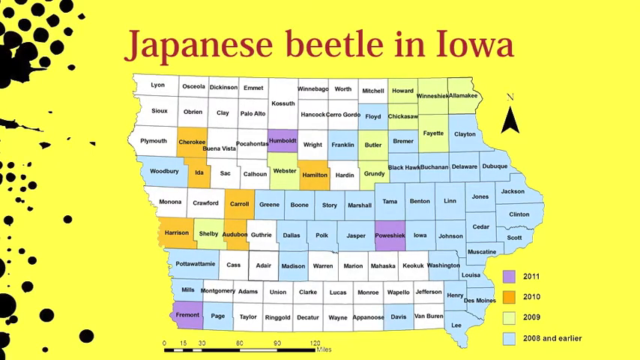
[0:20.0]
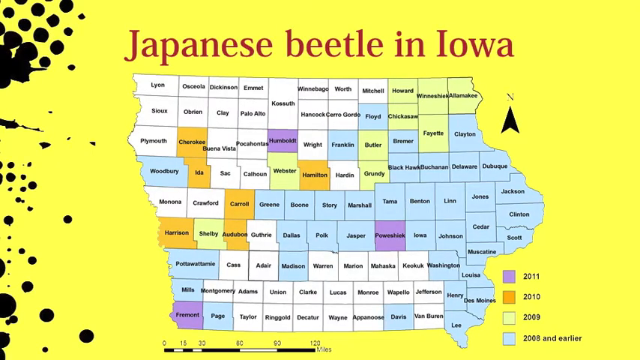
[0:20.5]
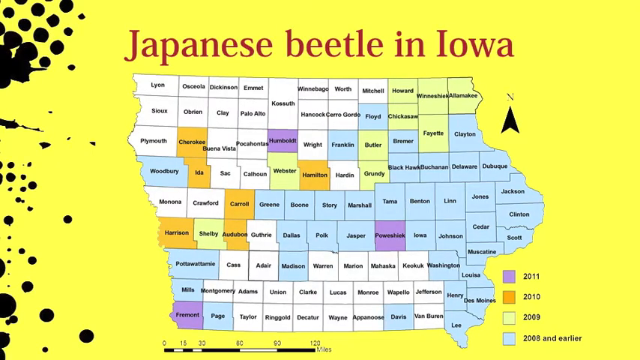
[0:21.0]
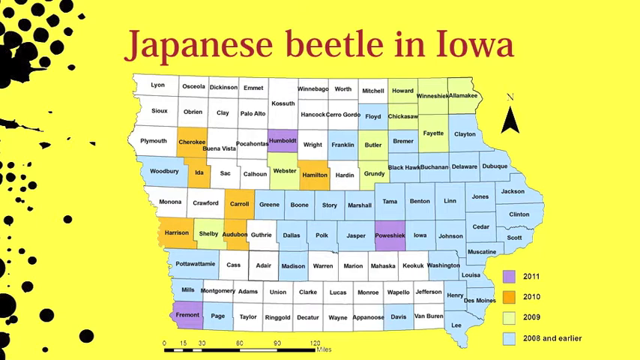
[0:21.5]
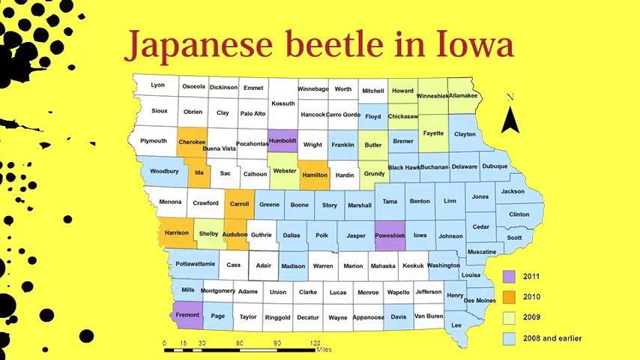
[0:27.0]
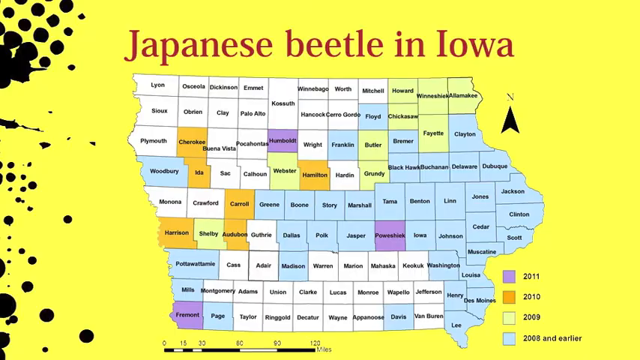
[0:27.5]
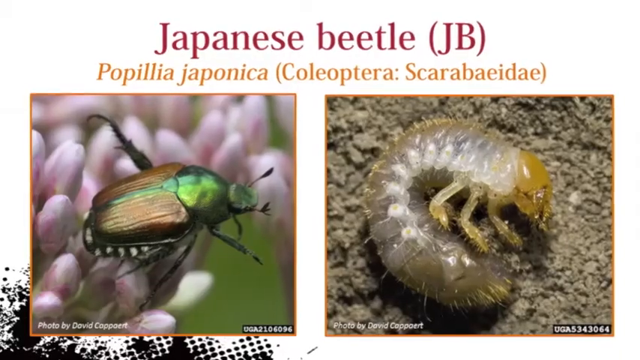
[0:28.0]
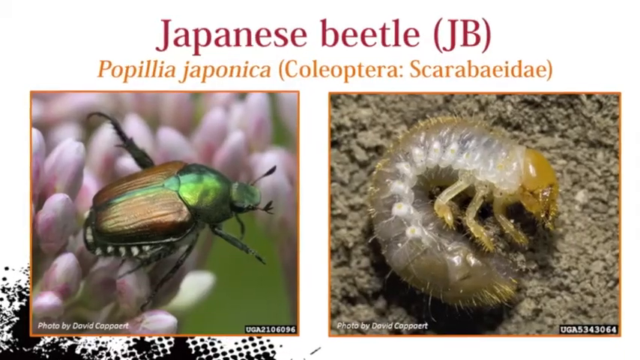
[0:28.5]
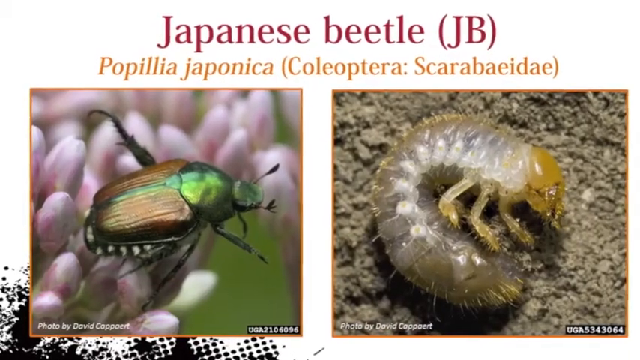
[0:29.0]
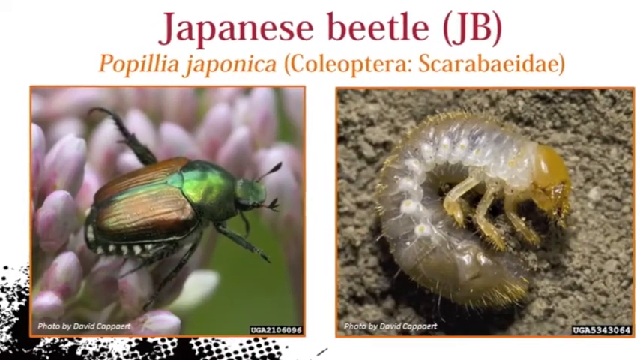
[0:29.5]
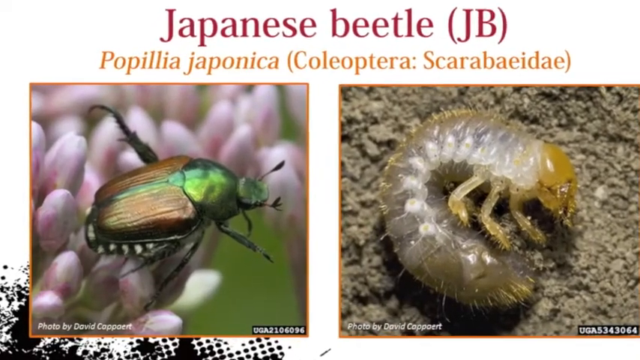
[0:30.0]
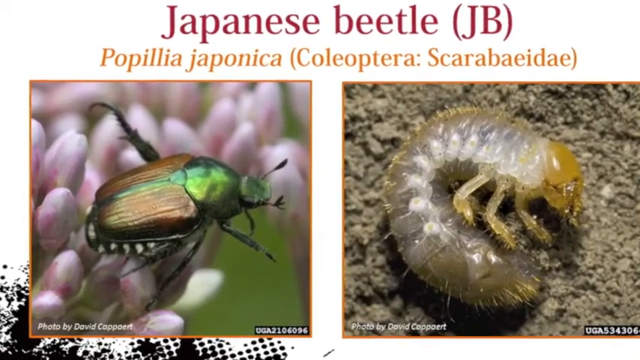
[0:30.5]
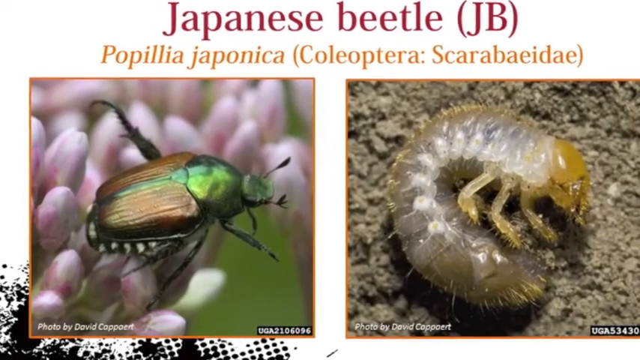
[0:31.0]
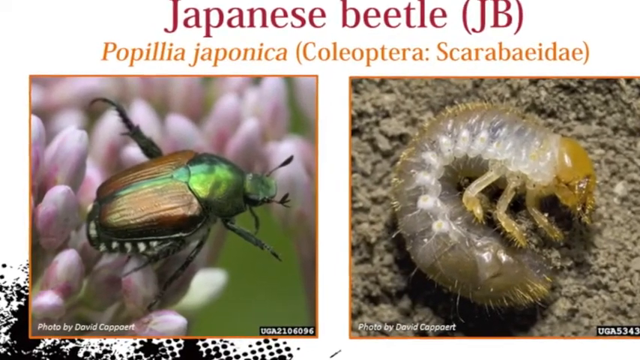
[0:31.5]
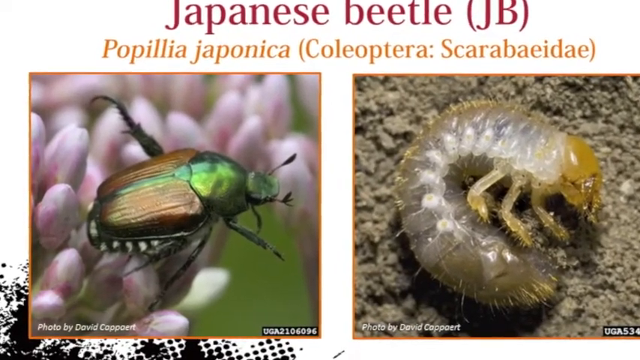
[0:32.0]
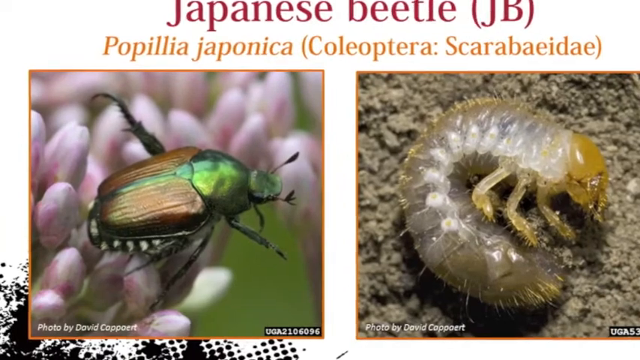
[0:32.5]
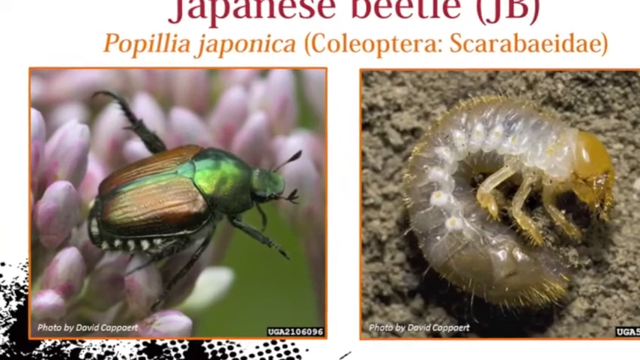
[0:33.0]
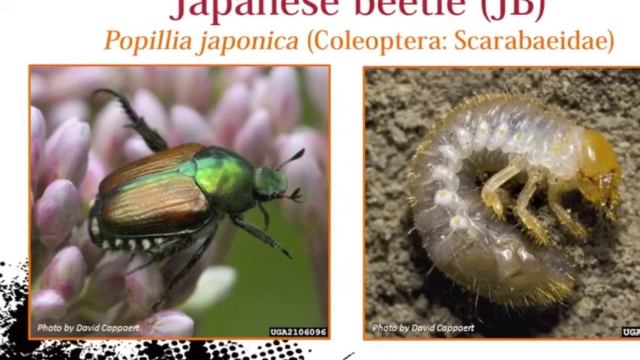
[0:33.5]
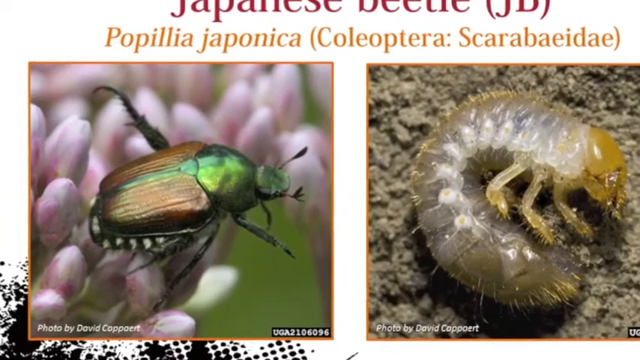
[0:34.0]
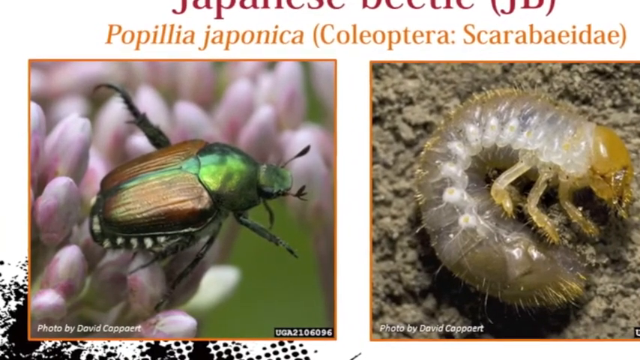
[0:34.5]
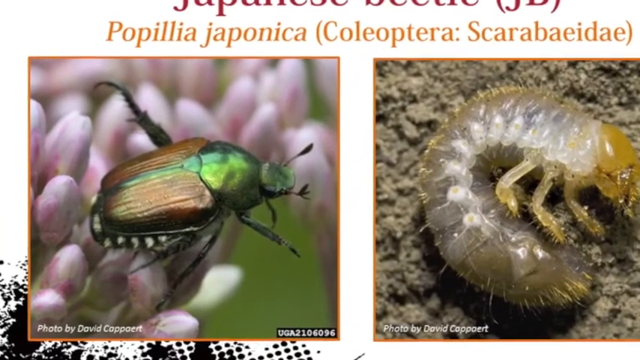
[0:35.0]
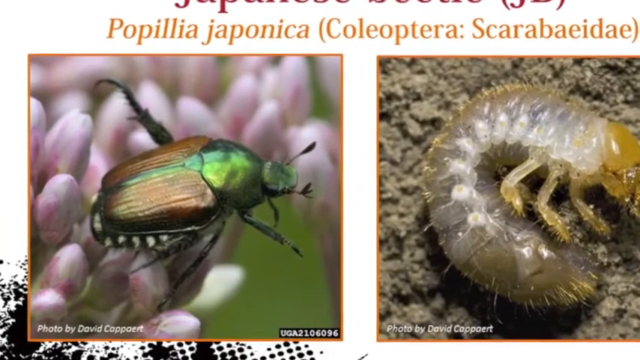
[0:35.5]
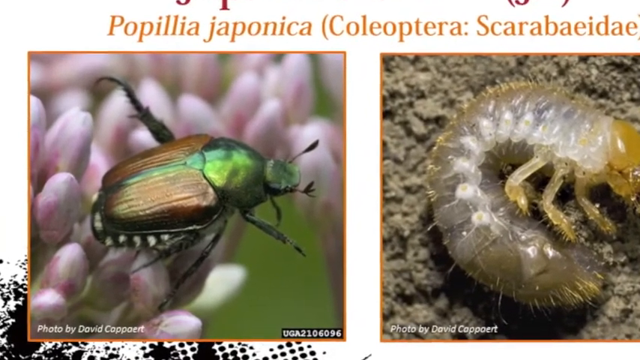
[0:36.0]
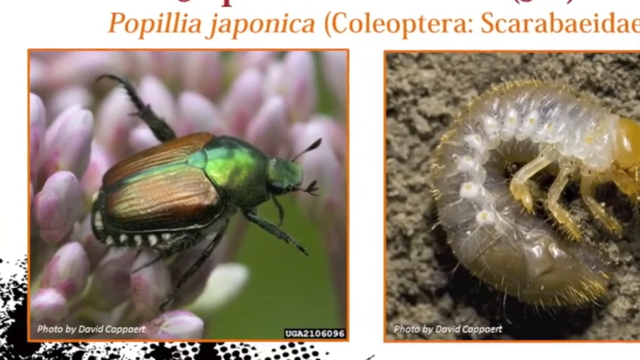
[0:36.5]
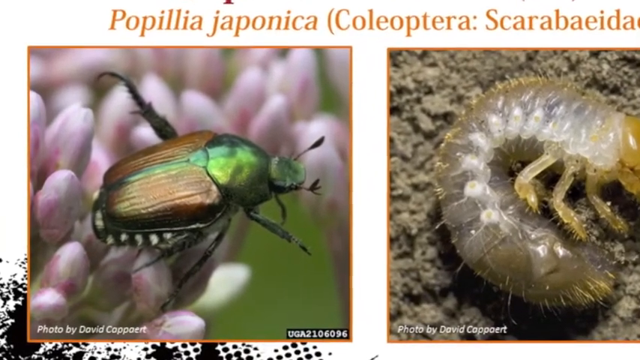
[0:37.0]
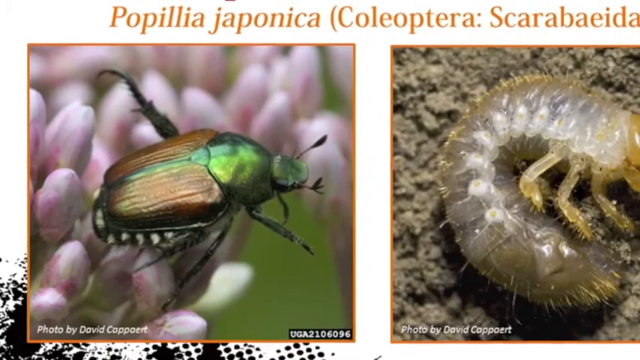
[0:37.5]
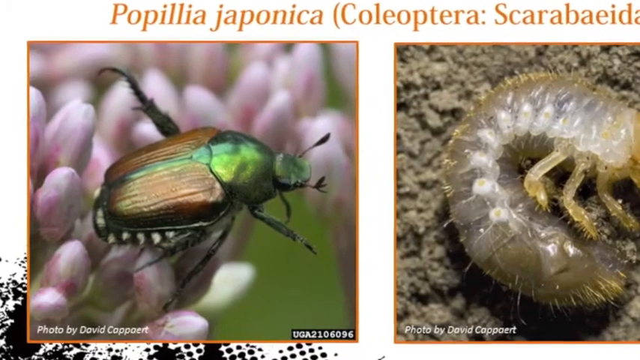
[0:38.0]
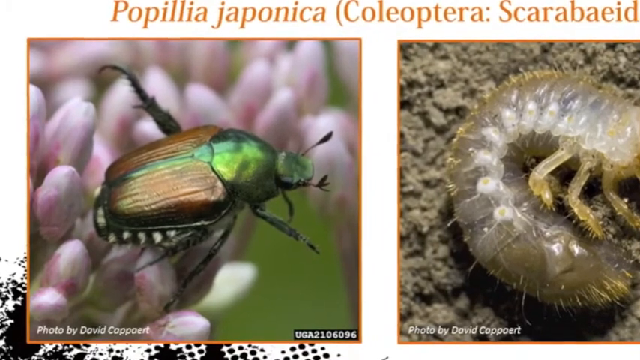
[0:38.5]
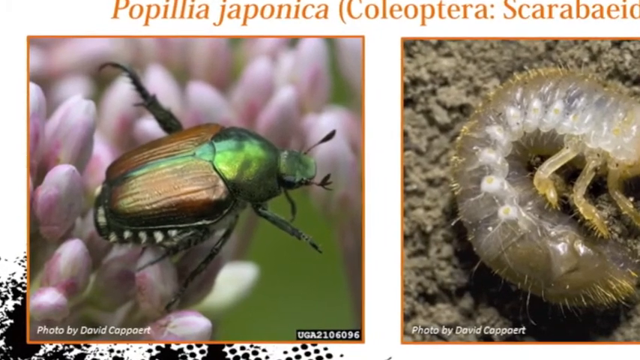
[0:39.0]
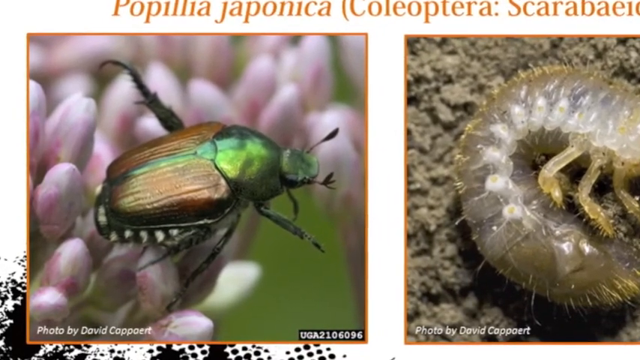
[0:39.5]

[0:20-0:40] The map is shown with "Japanese Beetle in Iowa" at the top, a yellow background, and black spots on the left side of the screen. A map key shows the year associated with each color on the map. Much of the map is blue, other sections are white, only a few are purple and orange, and only a few are green. The years associated with the colors are shown at the bottom right. The video then cuts to a slide about the Japanese beetle, with "Japanese Beetle" in red at the top followed by "(JB)". Below it is a scientific name with more text in parentheses, and below that are two images: the left one appears to show a green beetle on a leaf, and the right one looks like a see-through beetle curled up on its side on the ground.